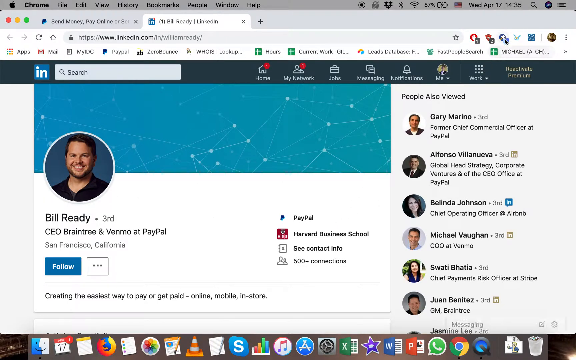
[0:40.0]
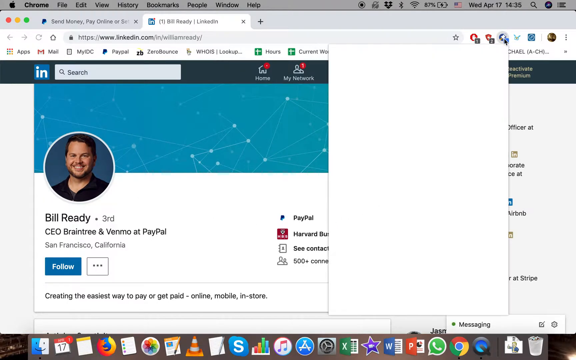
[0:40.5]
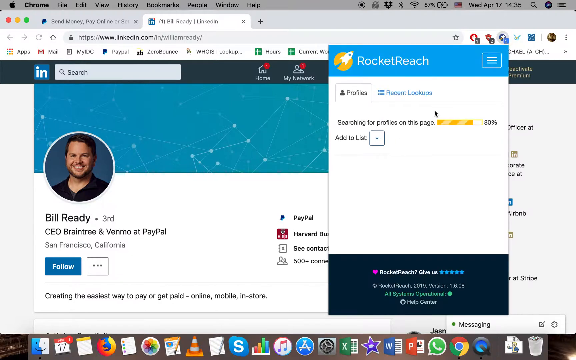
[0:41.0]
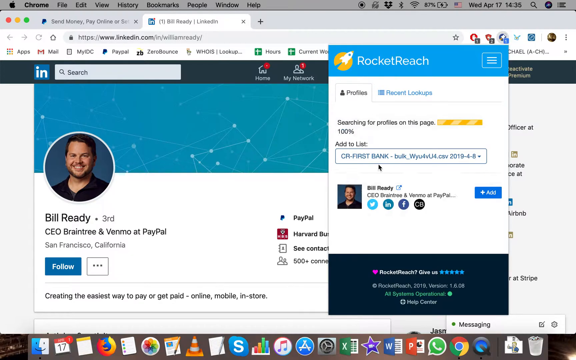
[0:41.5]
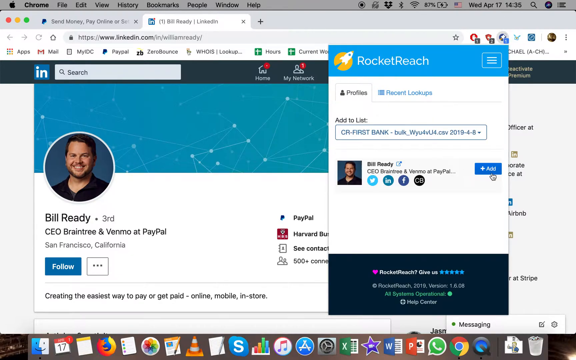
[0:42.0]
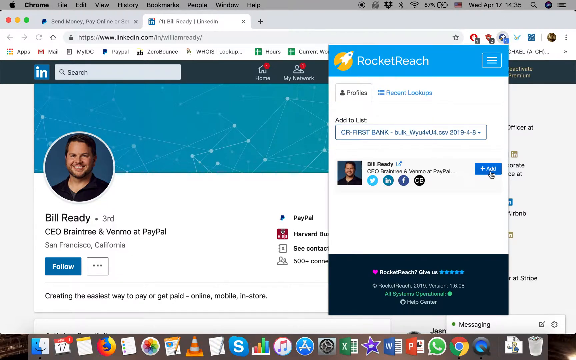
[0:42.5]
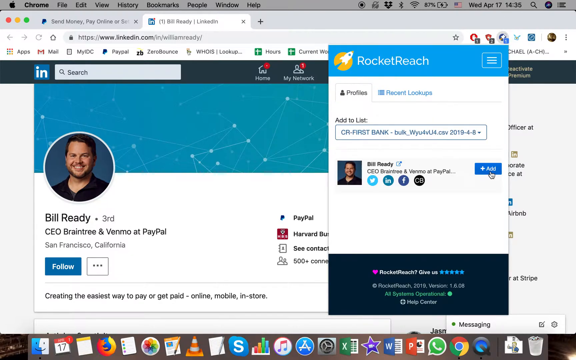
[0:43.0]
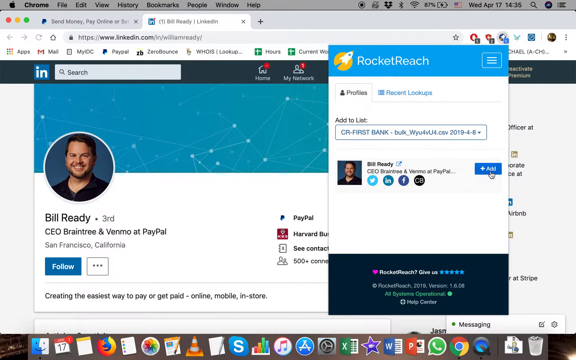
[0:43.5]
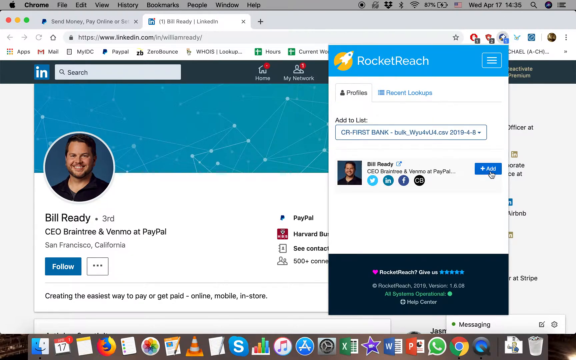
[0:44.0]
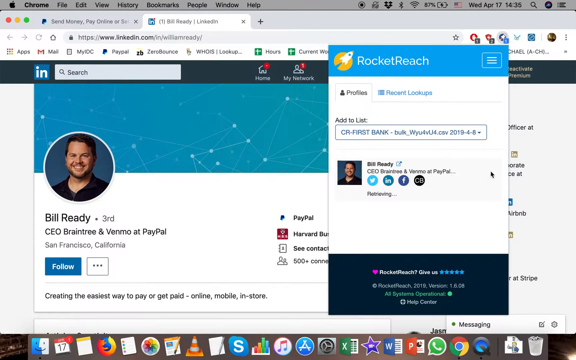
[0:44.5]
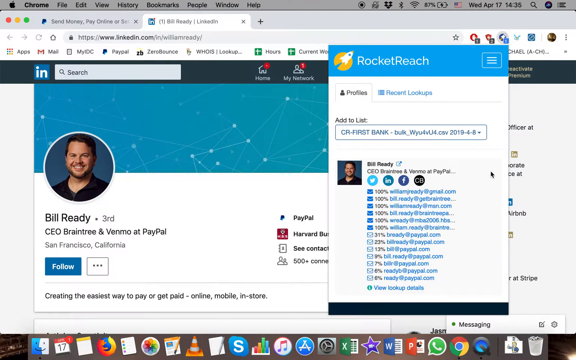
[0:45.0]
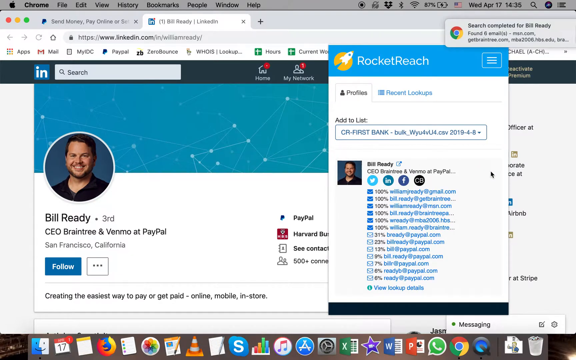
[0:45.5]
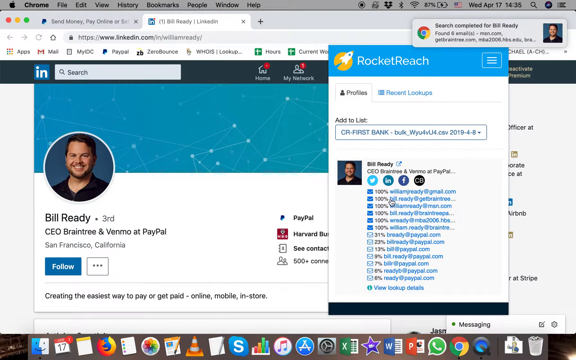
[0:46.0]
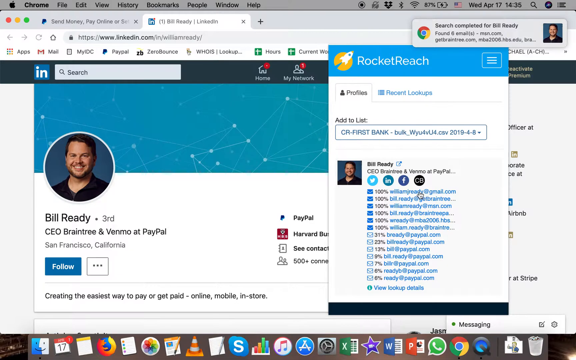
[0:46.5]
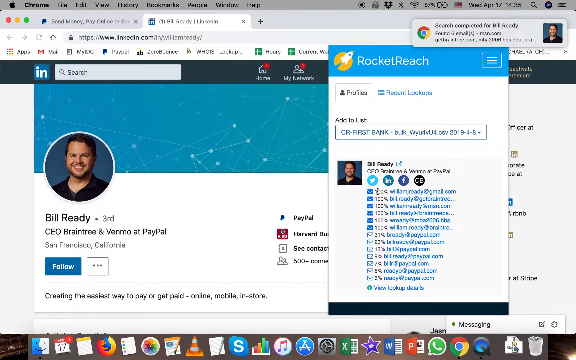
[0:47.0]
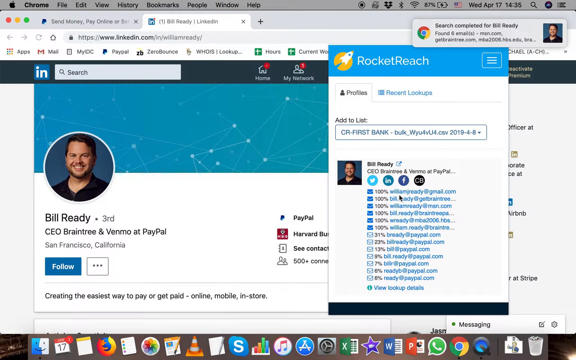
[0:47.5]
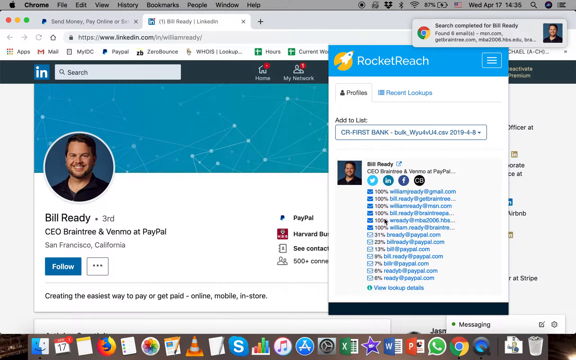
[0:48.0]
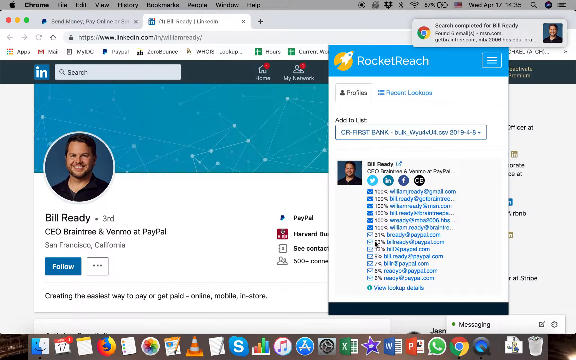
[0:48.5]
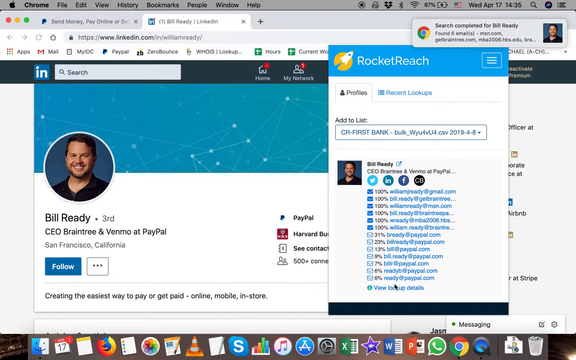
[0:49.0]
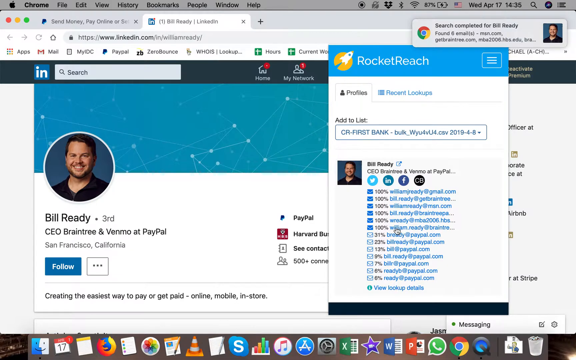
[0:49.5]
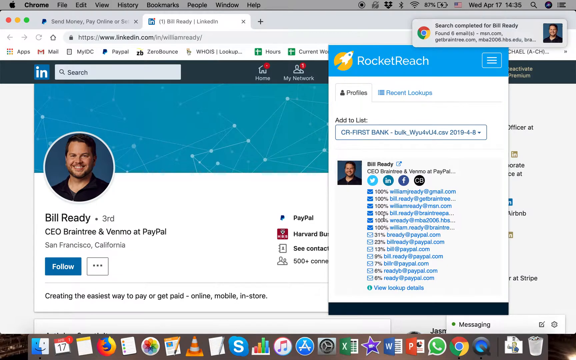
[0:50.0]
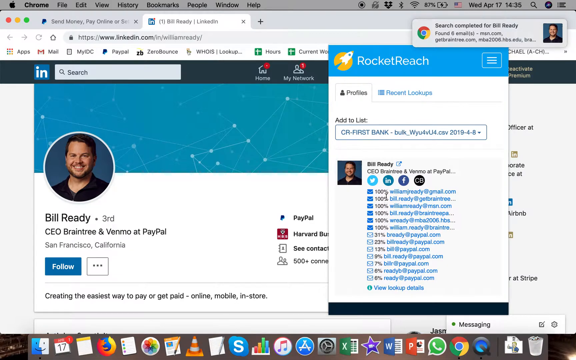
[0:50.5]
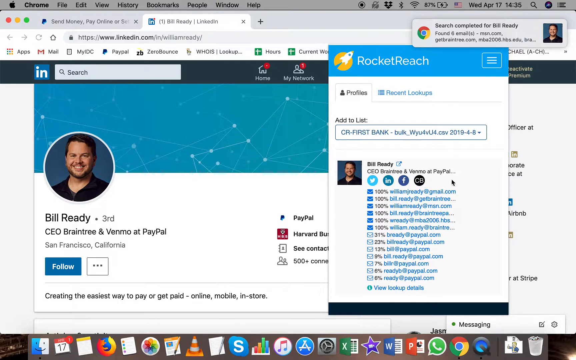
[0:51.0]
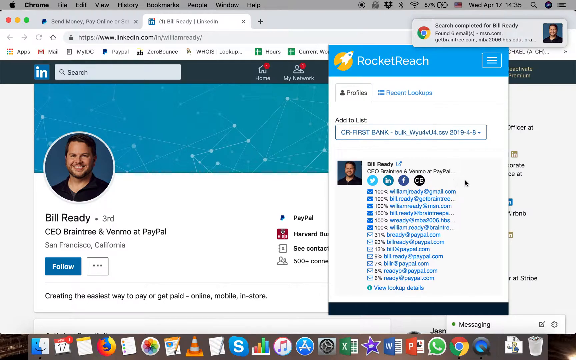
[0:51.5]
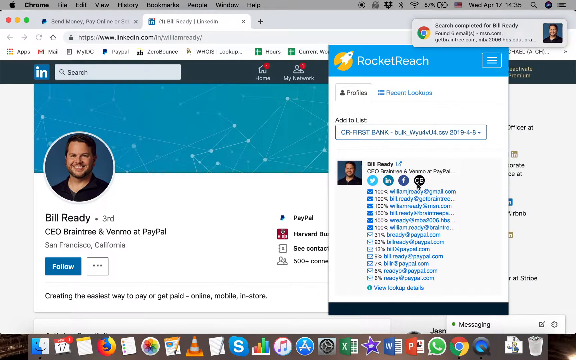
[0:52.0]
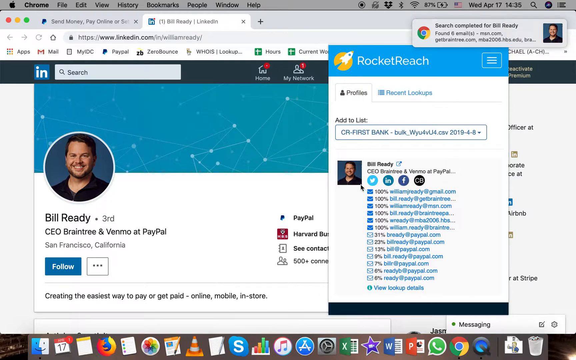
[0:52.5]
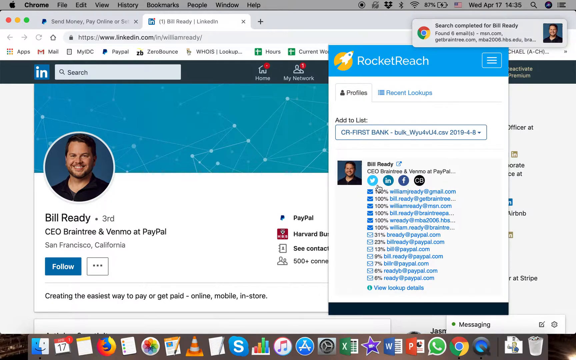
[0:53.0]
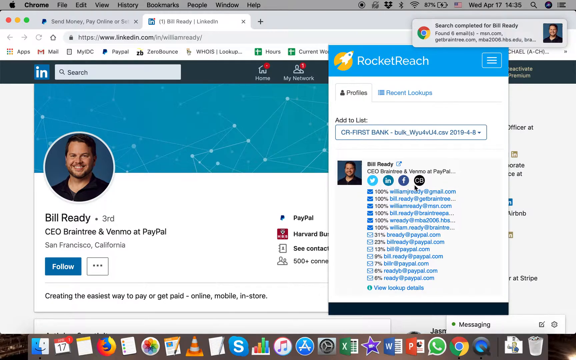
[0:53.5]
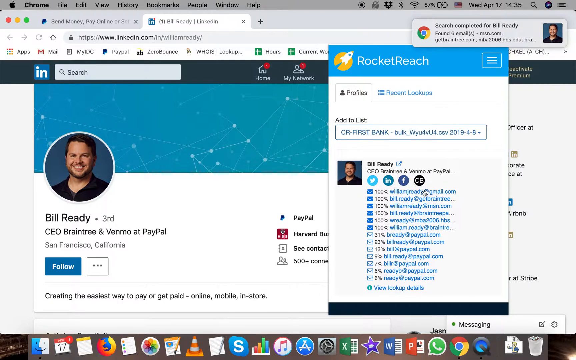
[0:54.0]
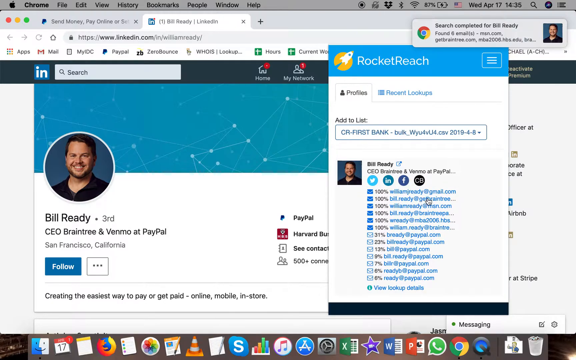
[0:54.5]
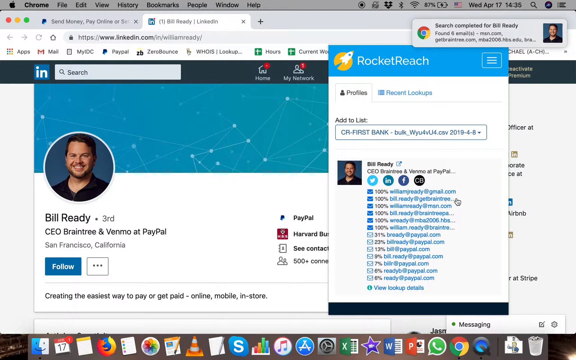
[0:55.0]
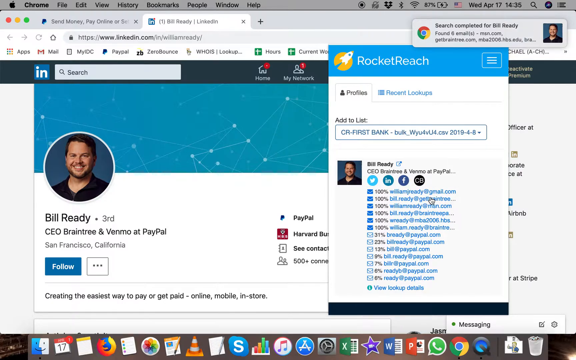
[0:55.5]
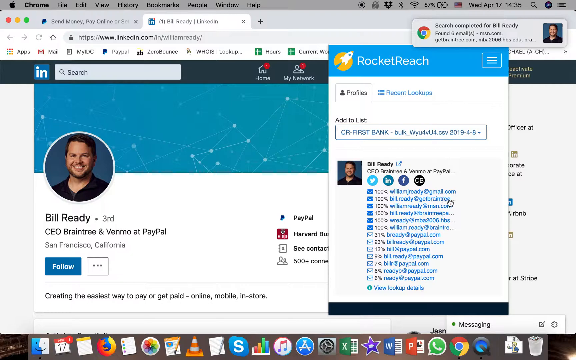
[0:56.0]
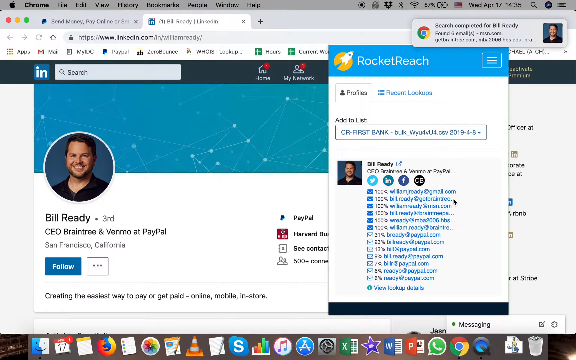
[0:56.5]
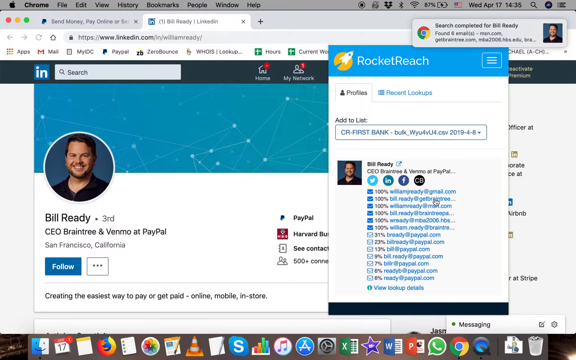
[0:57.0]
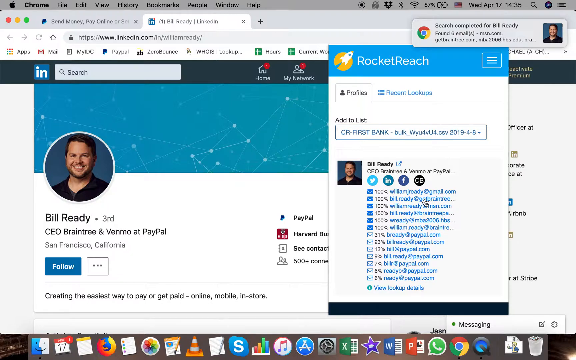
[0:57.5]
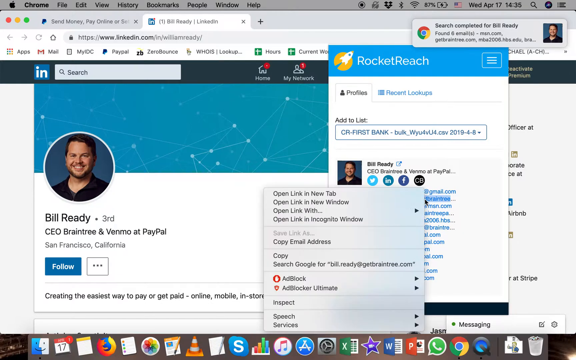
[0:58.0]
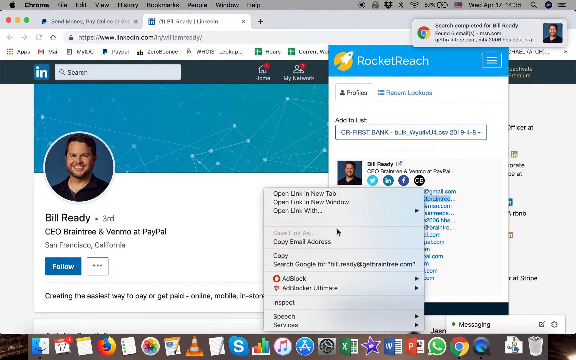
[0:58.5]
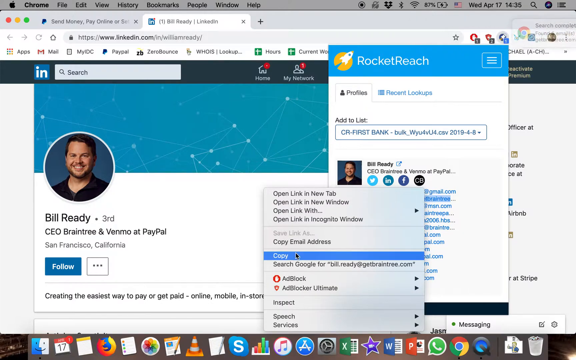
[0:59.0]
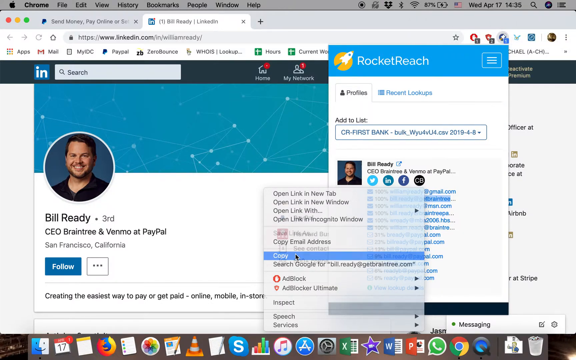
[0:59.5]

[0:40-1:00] The browser now has two tabs open. The first, inactive tab is PayPal.com; the second, active tab is a LinkedIn profile for Bill Reddy, CEO of Braintree and Venmo at PayPal. The user clicks an extension icon that looks to be an O shape, opening a window inside the browser that reads "Rocket Reach." The extension shows a profile associated with the web page, Bill Reddy, CEO of Braintree and Venmo at PayPal, with four social media links and an add button. The user clicks add; it loads briefly and then shows multiple email addresses associated with the person.